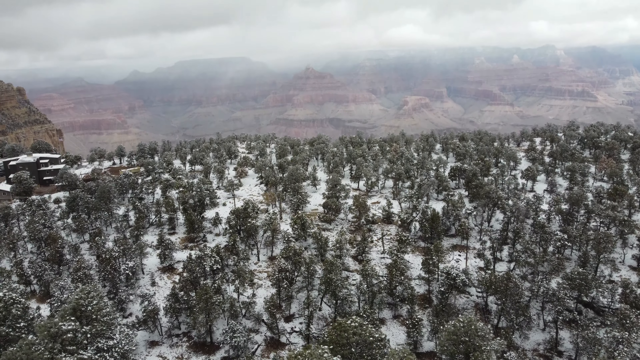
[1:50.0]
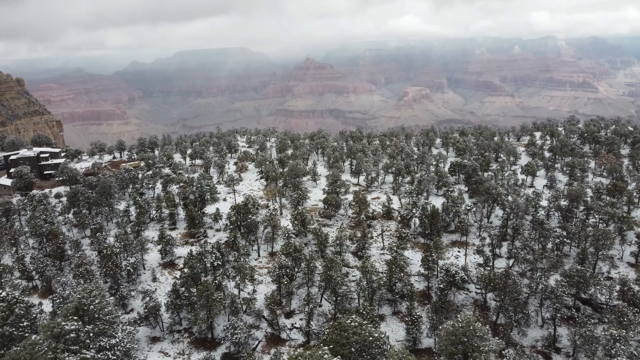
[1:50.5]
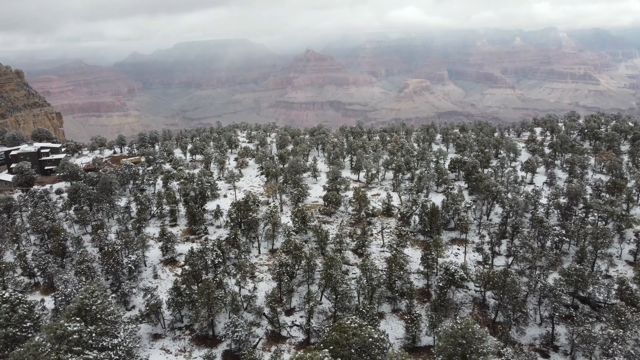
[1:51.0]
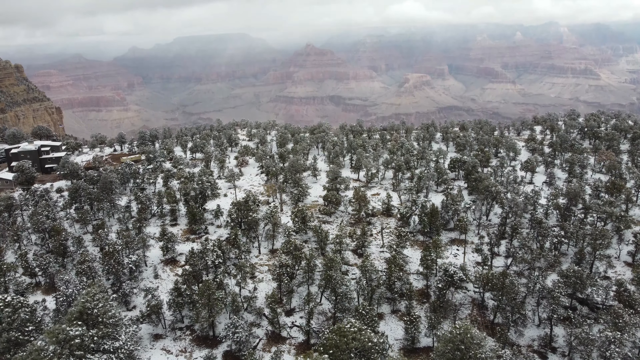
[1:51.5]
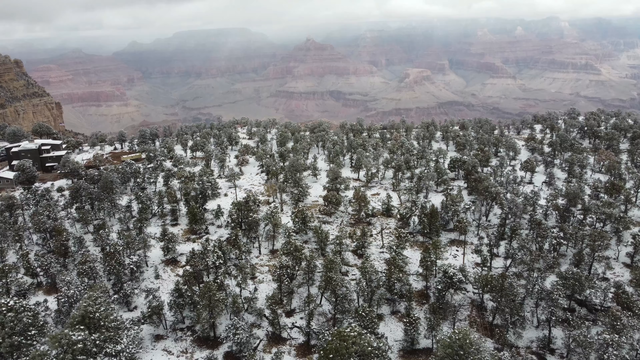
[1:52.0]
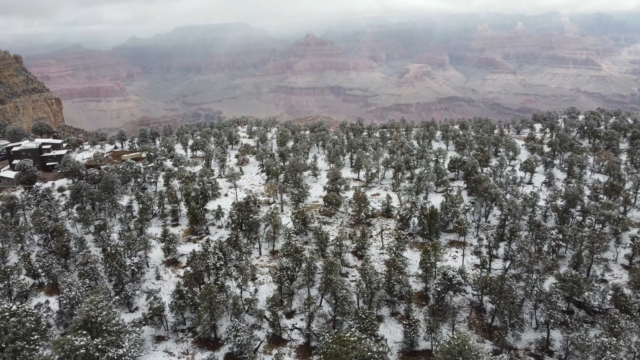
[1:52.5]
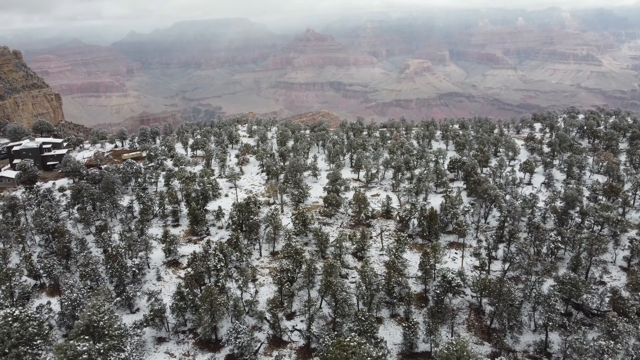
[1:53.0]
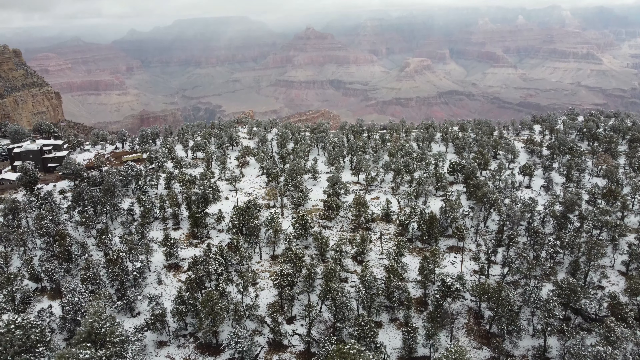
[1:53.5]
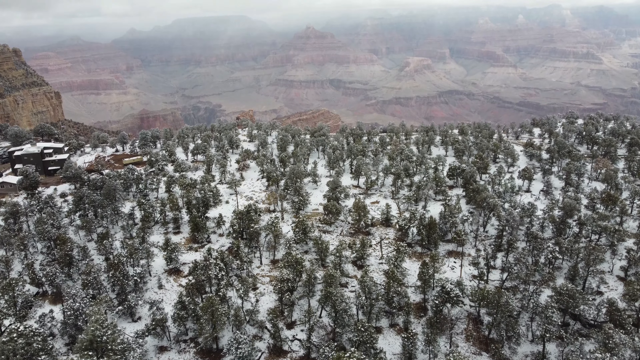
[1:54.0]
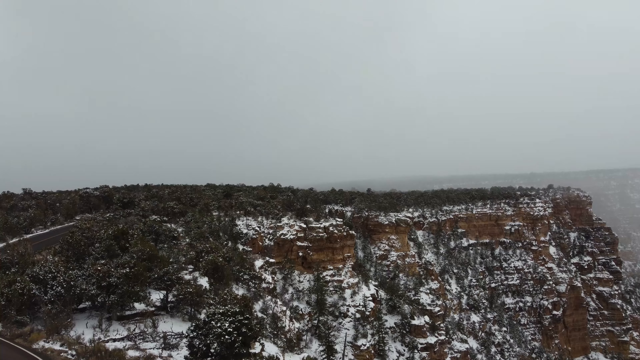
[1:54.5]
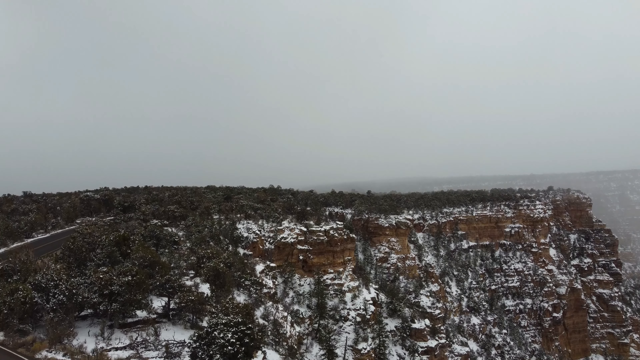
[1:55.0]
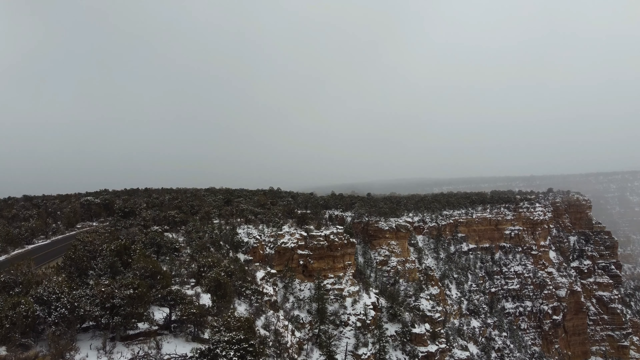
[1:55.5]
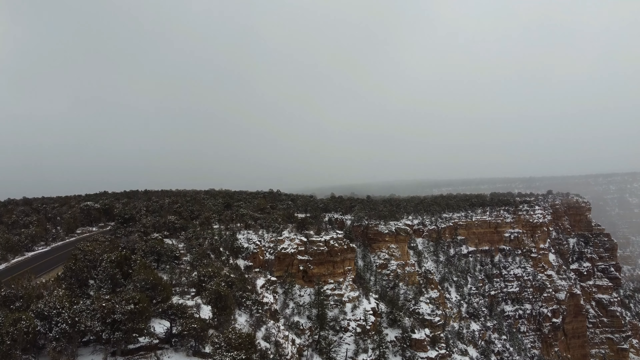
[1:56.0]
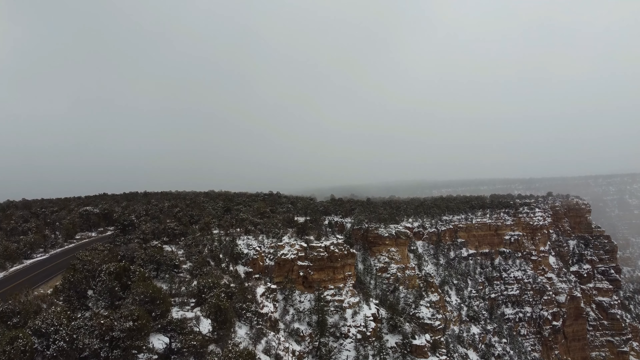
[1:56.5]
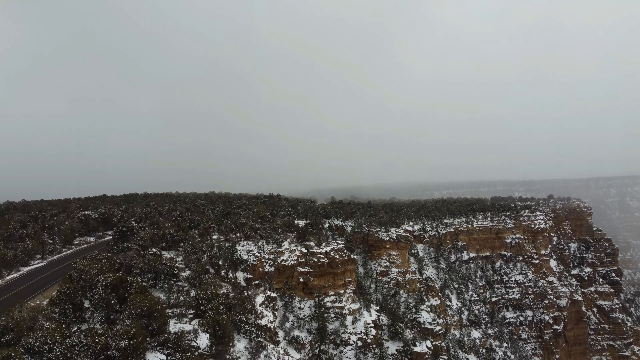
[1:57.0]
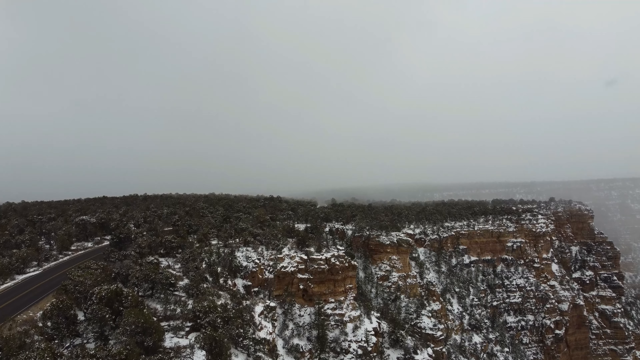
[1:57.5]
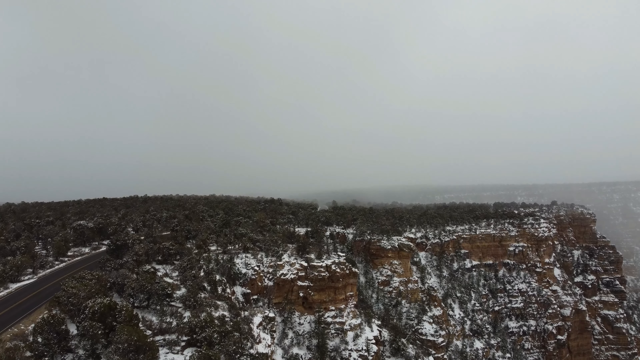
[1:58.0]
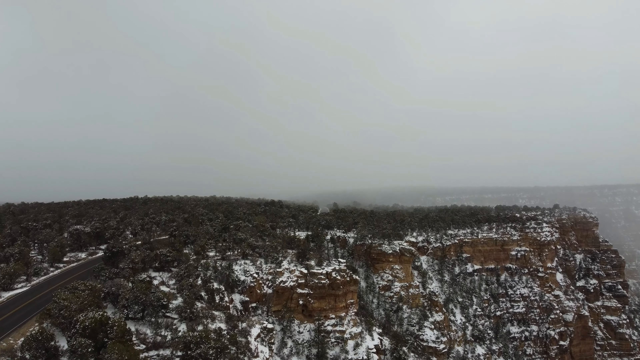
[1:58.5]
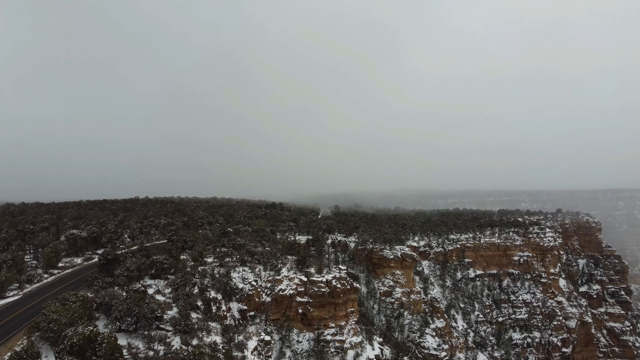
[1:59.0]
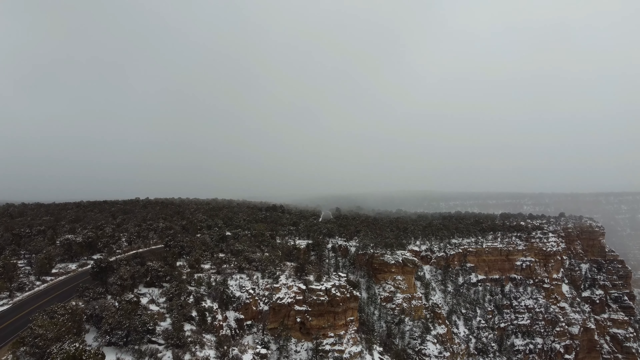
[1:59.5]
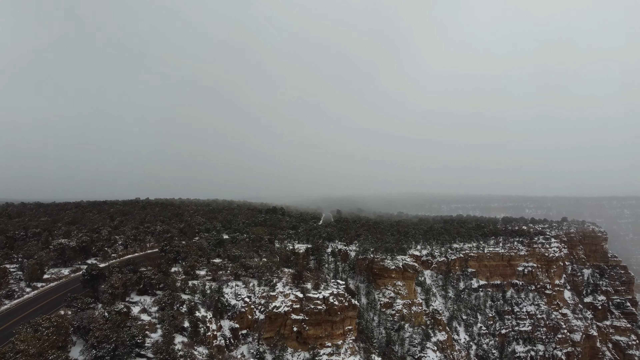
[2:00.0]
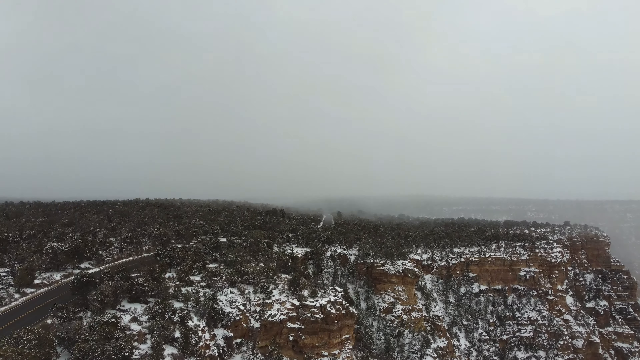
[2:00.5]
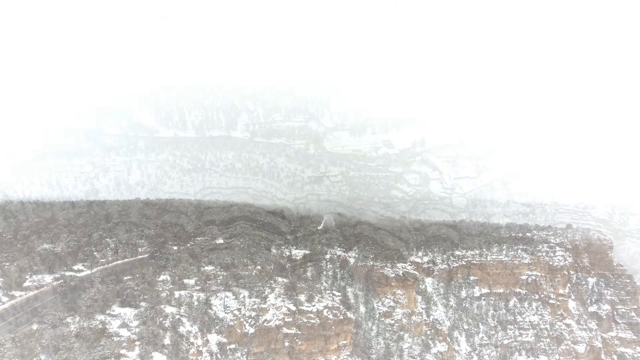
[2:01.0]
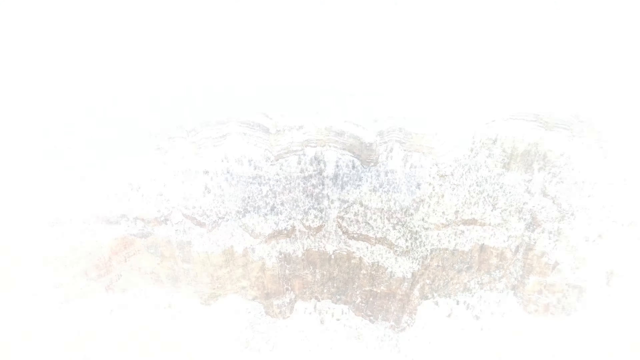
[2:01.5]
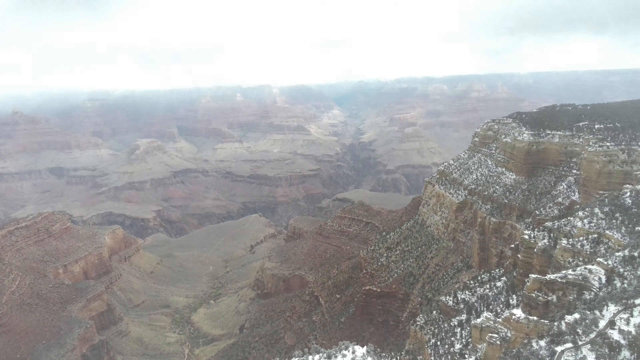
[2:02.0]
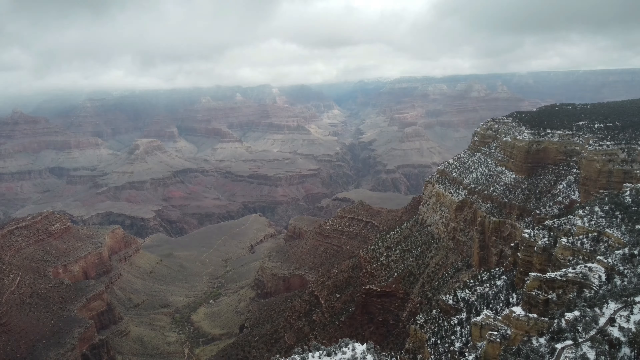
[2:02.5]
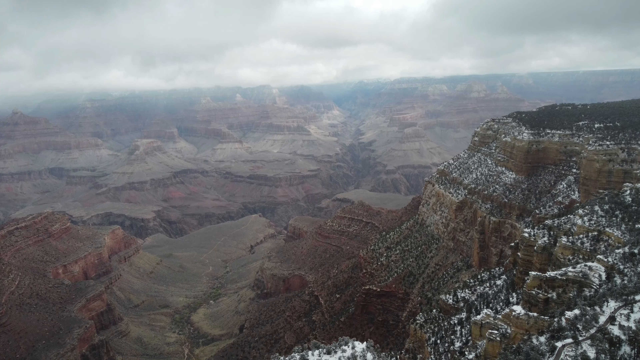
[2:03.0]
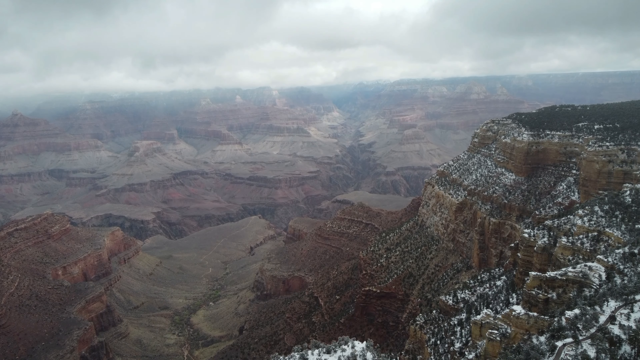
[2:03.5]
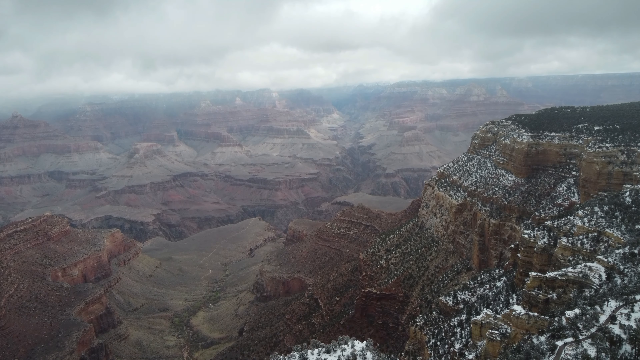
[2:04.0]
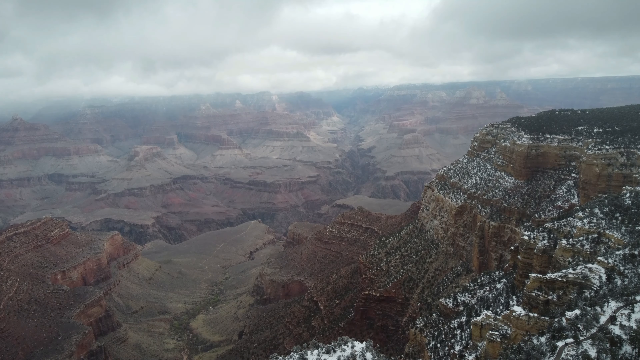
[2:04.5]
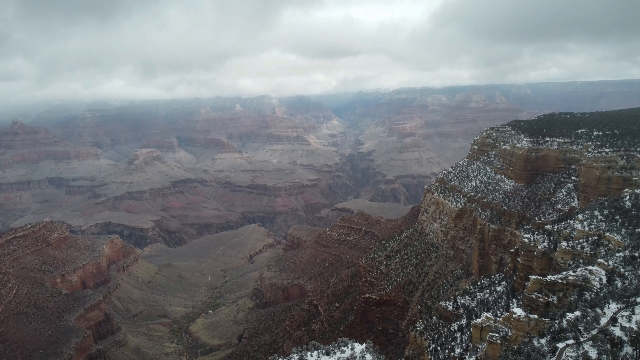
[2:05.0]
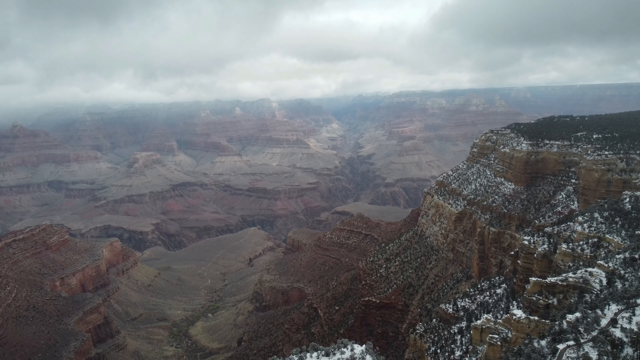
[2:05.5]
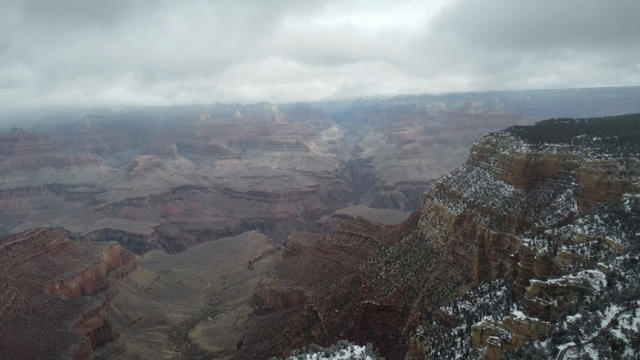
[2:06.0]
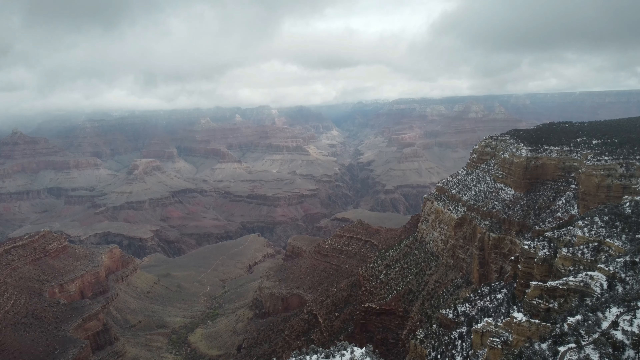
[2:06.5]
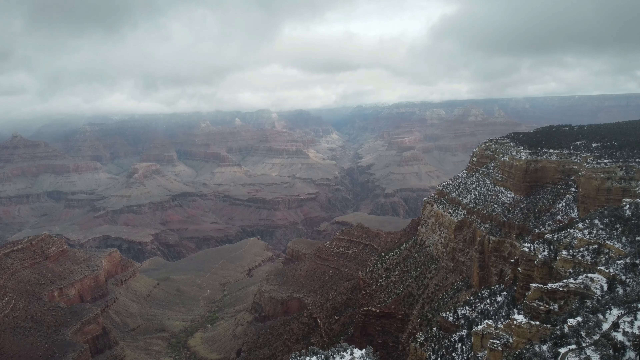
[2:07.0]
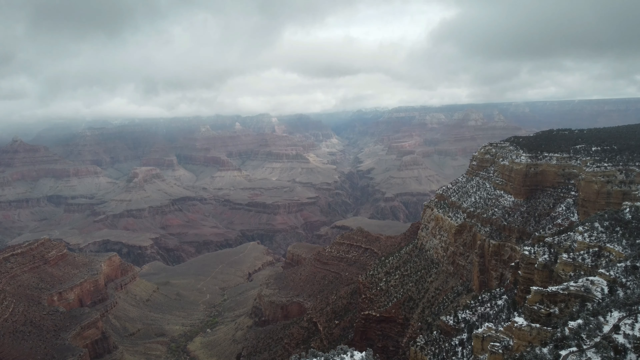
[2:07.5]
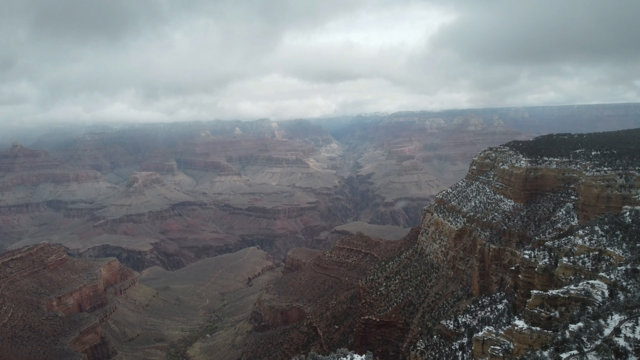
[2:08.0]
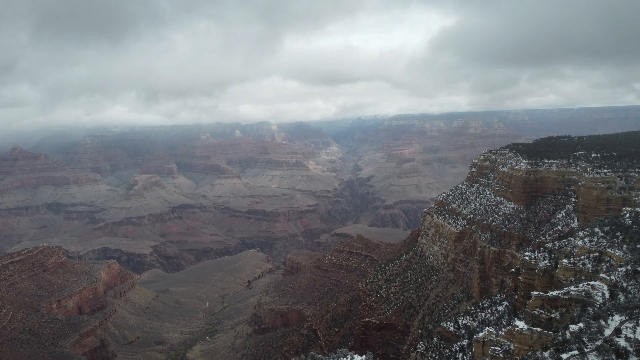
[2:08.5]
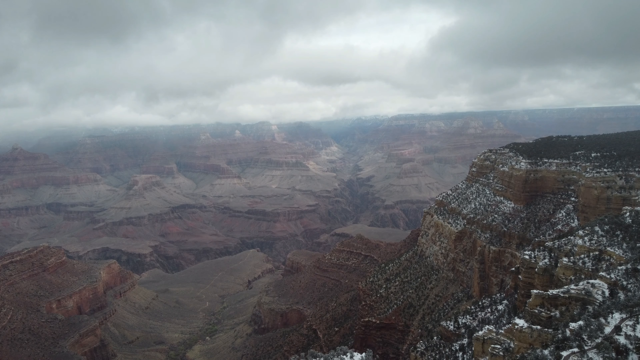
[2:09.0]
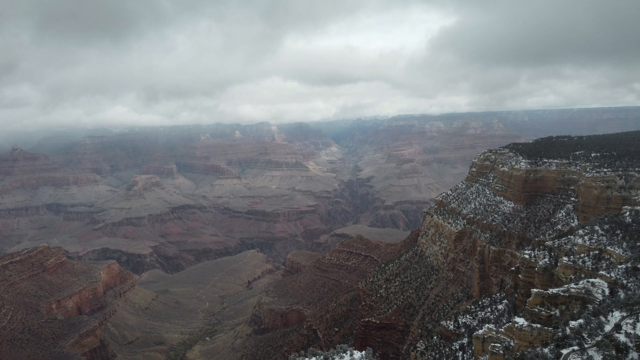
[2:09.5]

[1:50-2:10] The drone flies above what looks like a forest, and the Grand Canyon appears in the distance on the far side of the forest, with more views of it as the flight continues. Another shot shows what looks like the right side of the forest, on top of a mountaintop, with rocks that have snow on them. The camera, apparently a drone, flies above as the forest appears in full and the Grand Canyon slightly appears in the distance. The video fades into a shot of the Grand Canyon, where the tops are filling up with what looks like snow, looking at the left side of the forest as the camera flies and lands slightly with slow movements.